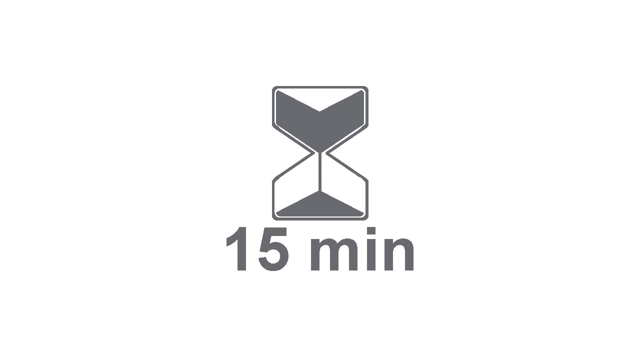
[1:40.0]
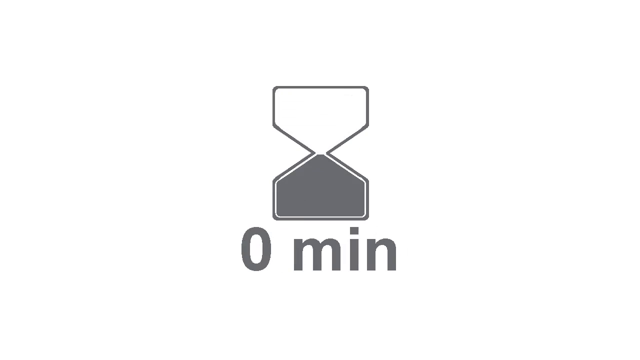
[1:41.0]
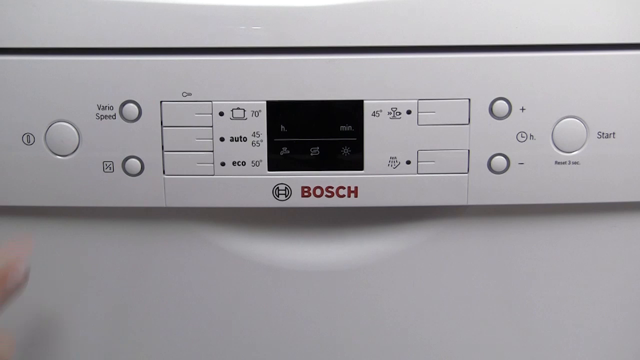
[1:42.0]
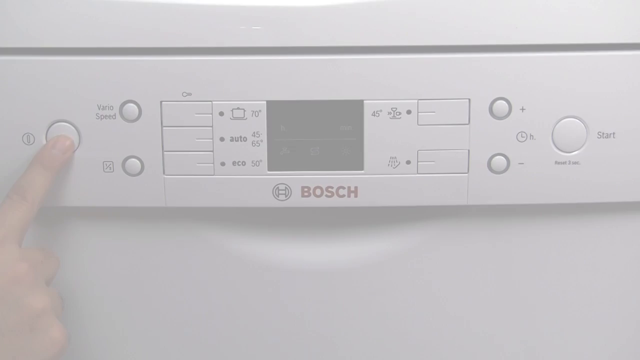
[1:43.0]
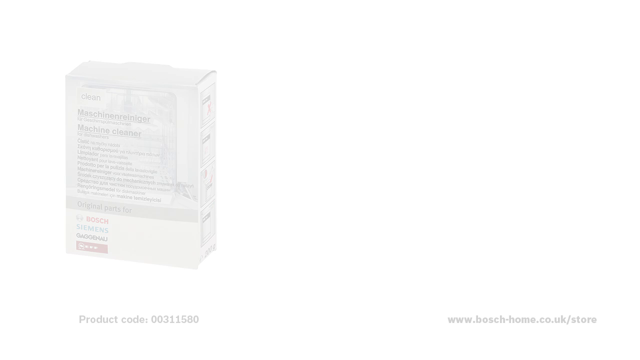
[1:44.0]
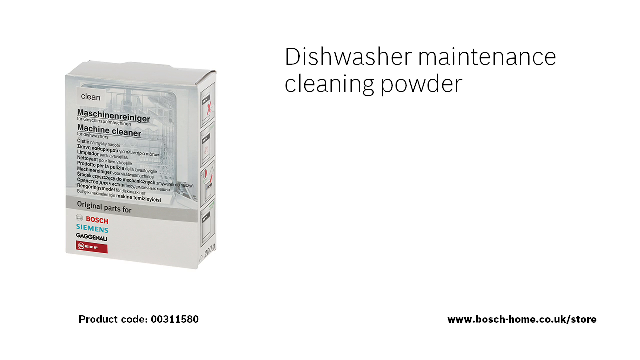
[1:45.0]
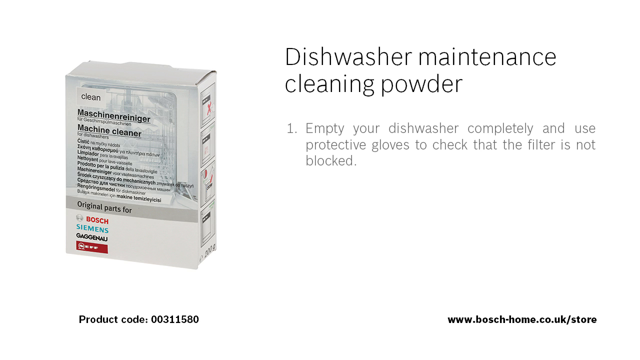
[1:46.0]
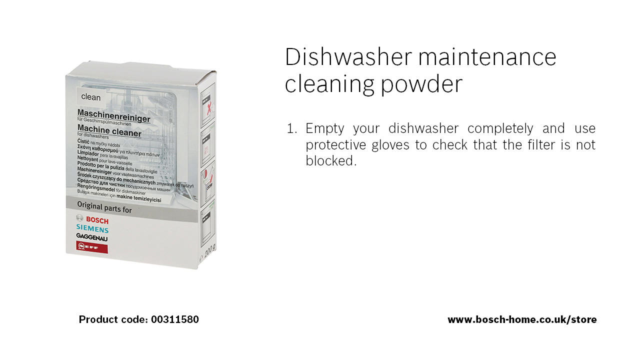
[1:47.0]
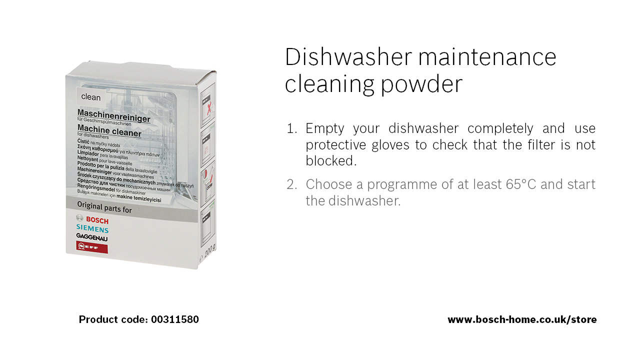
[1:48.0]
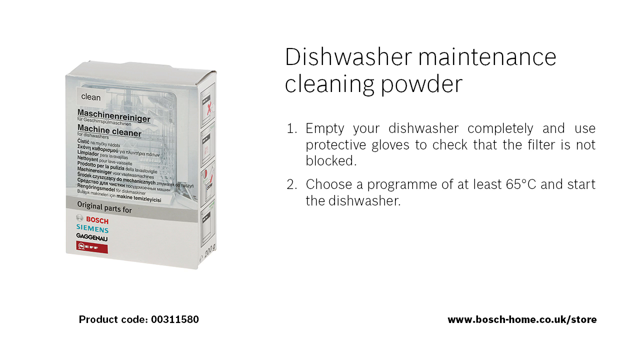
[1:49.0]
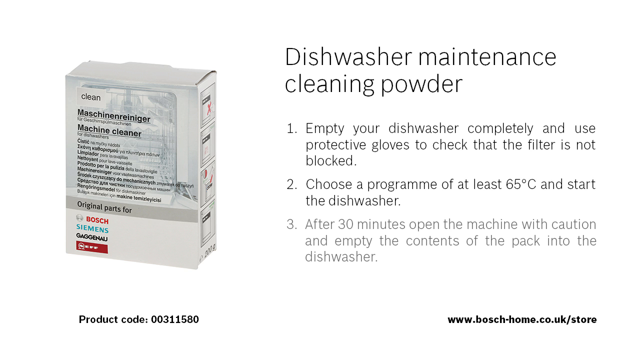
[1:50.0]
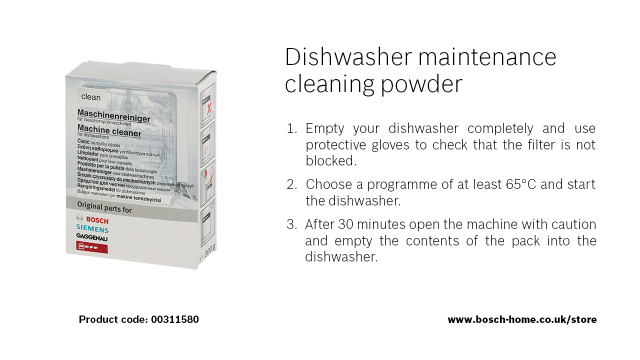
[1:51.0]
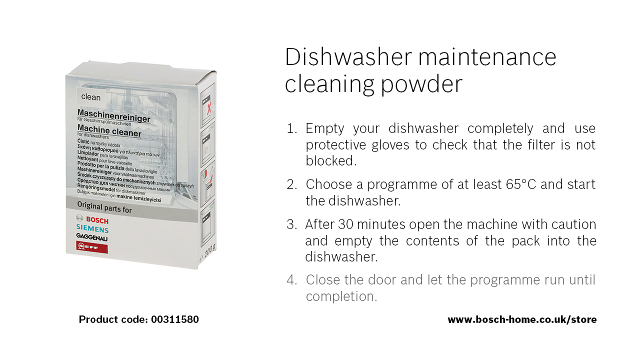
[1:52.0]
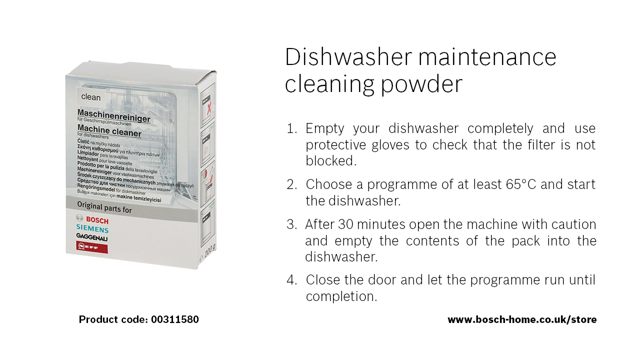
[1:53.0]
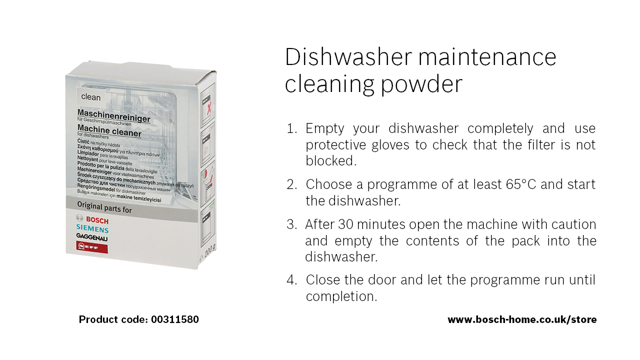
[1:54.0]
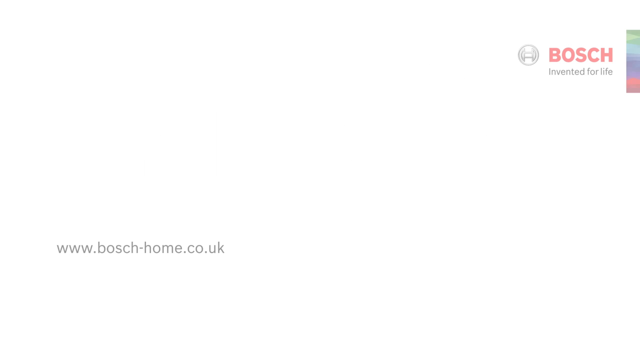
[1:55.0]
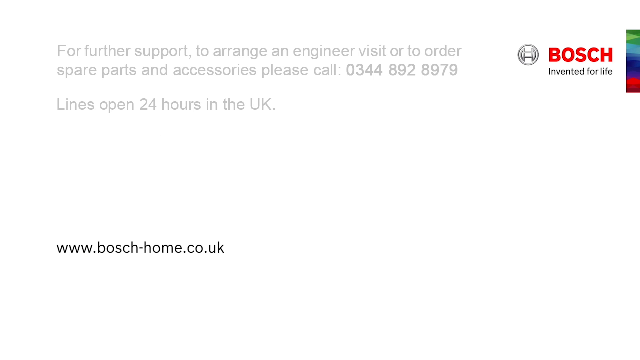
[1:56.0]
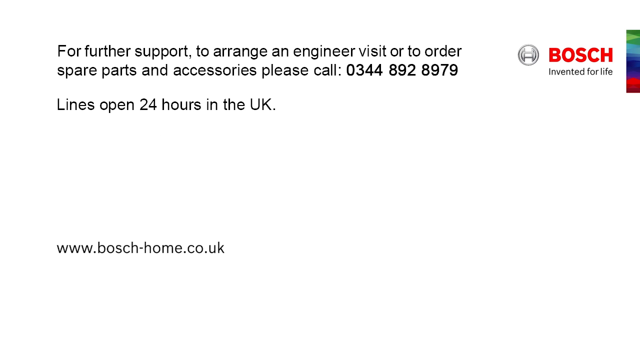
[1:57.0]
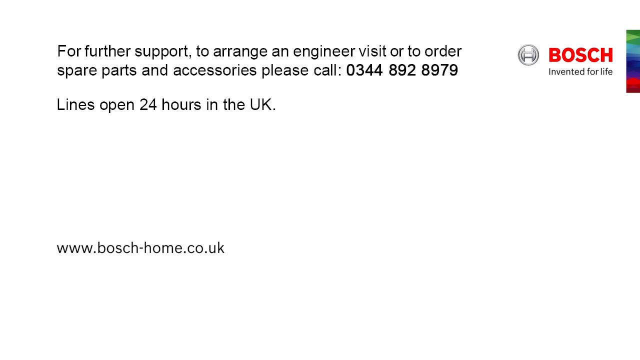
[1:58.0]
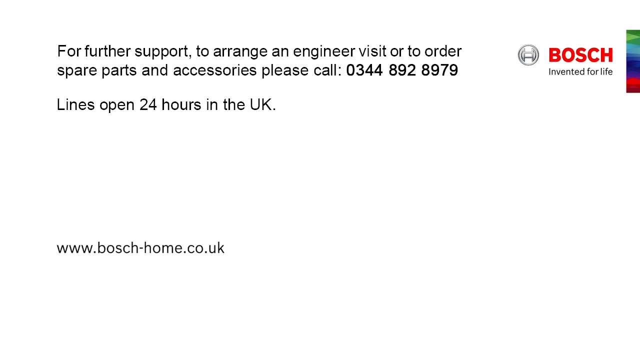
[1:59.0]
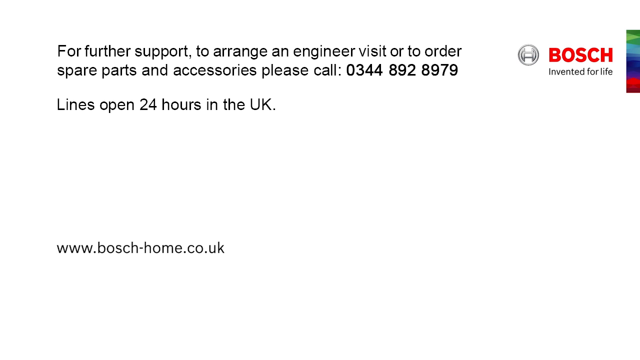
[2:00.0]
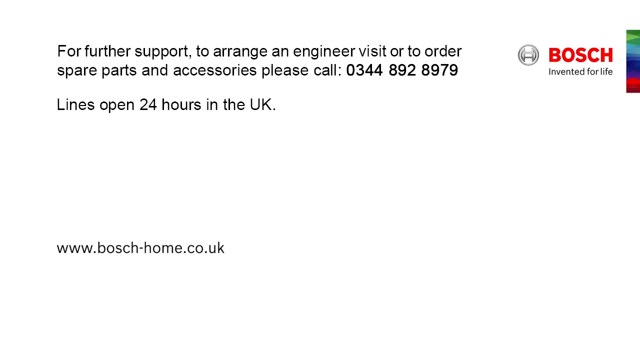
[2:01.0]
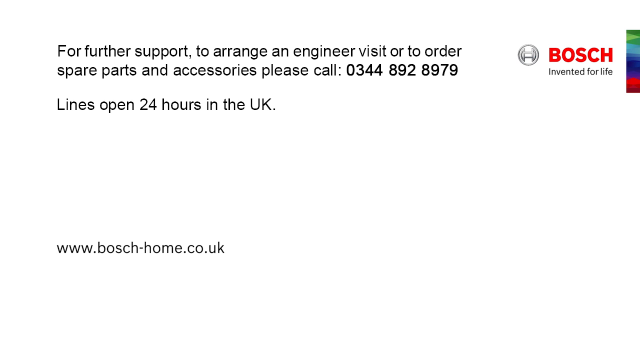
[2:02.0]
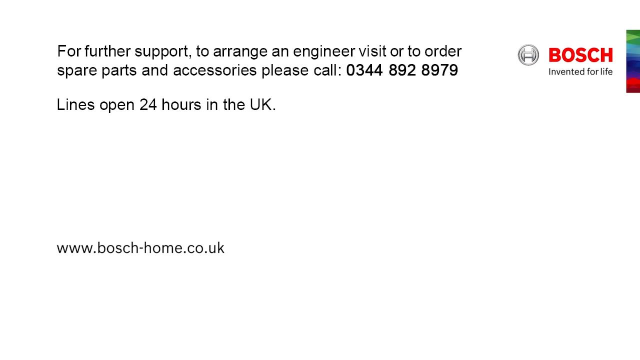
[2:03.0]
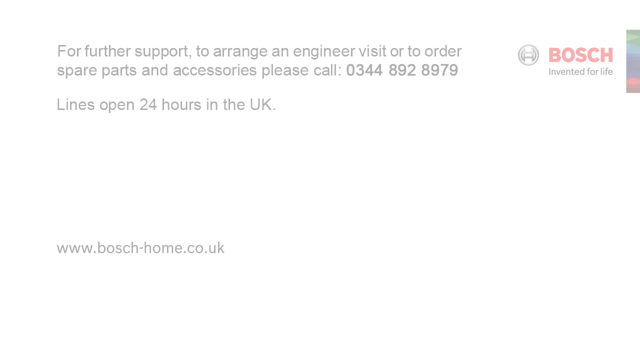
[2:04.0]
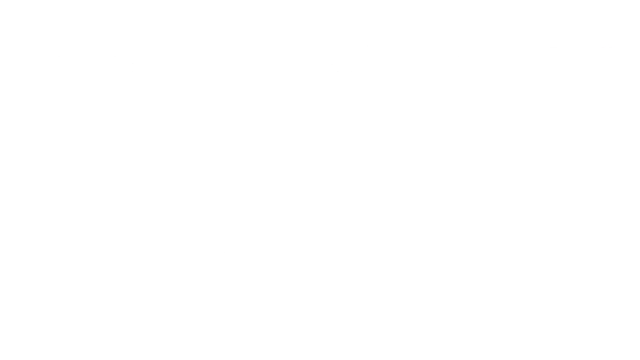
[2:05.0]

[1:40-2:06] The hourglass then shows the sand completely emptied into the bottom part, with zero minutes displayed. The dishwasher is shown again as the person's right index finger presses the power button, and a white screen appears. The dishwasher maintenance cleaning powder box is shown on the left and the dishwasher maintenance cleaning powder on the right, with instructions: empty your dishwasher and use protective gloves; number two, choose a program of at least 65 degrees Celsius and after 30 minutes open the machine with caution and empty the contents of the pack; number four, close the door and let the program run until completion. At the end, a white screen says that for further support, to arrange an engineer visit or to order spare parts and accessories, please call the number shown, with lines open 24 hours in the UK.